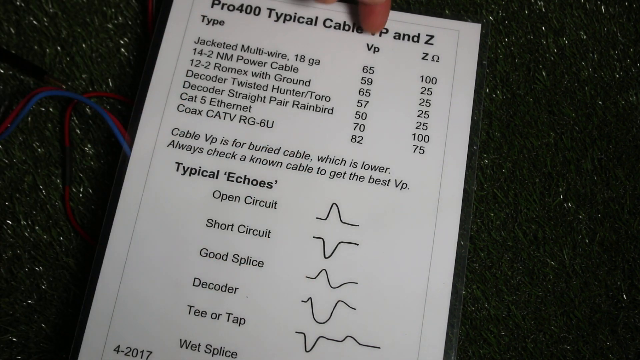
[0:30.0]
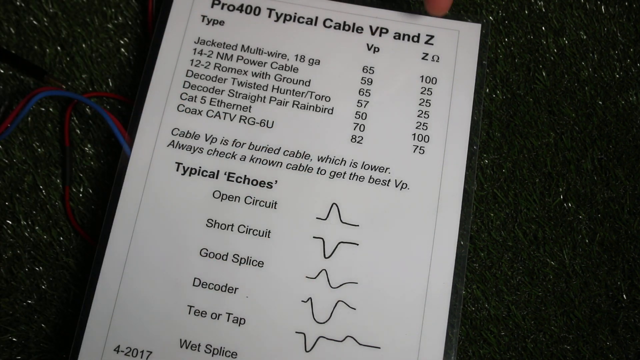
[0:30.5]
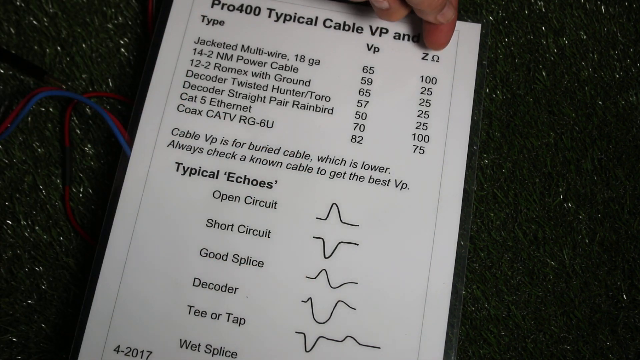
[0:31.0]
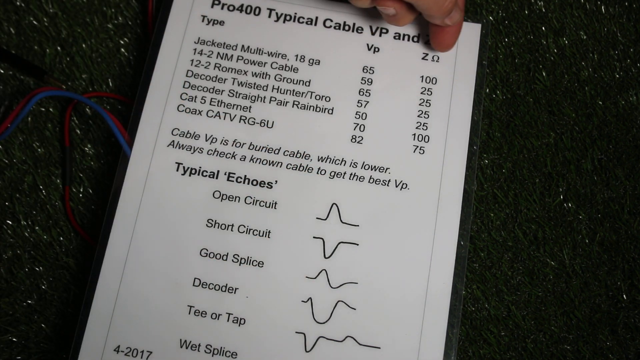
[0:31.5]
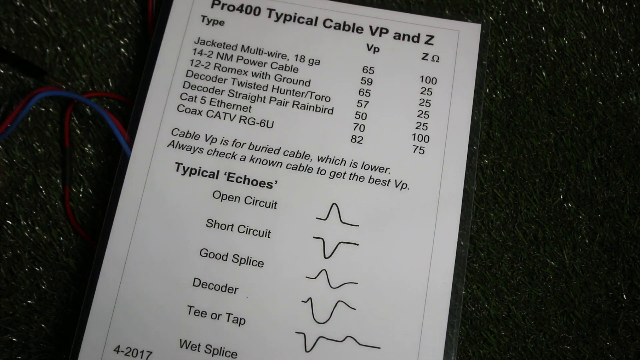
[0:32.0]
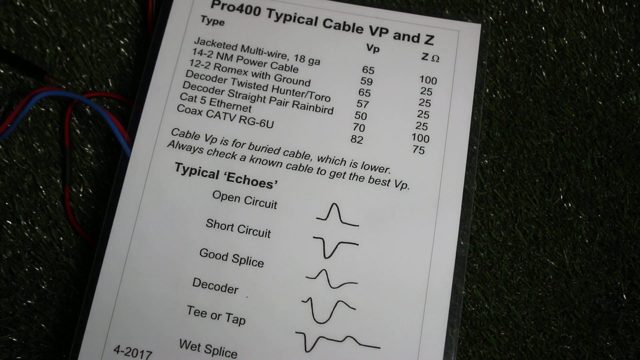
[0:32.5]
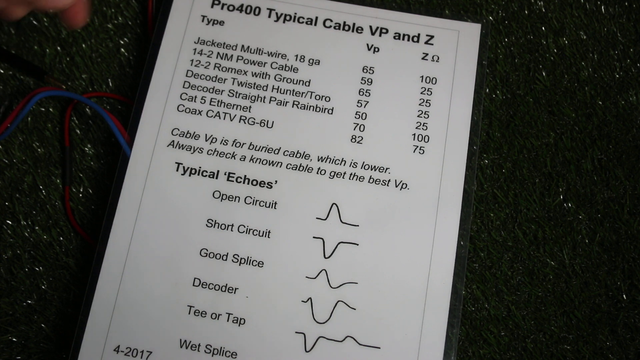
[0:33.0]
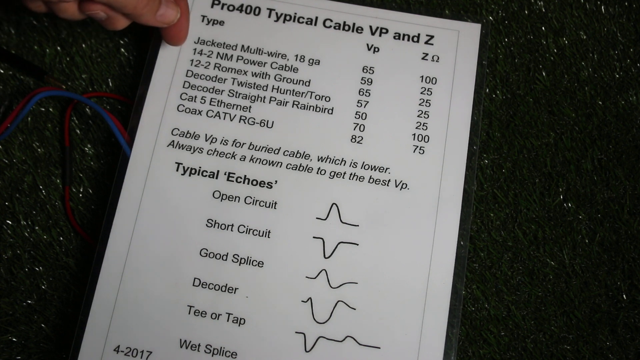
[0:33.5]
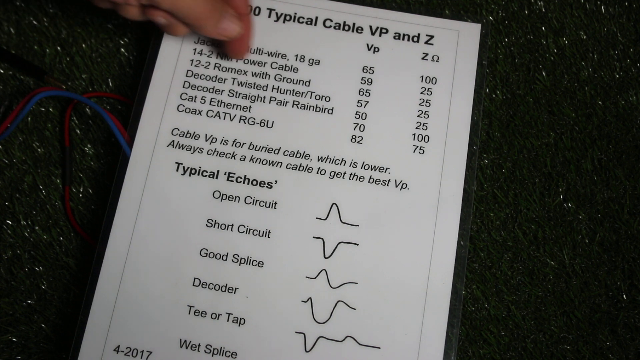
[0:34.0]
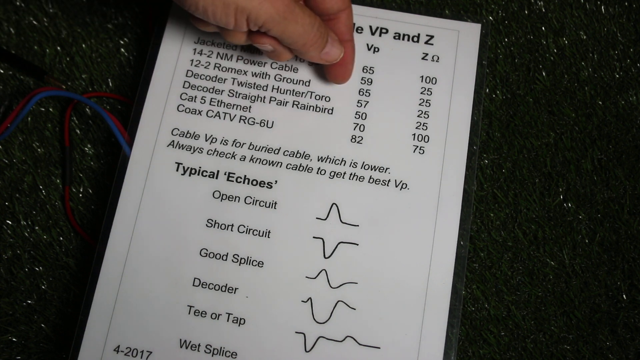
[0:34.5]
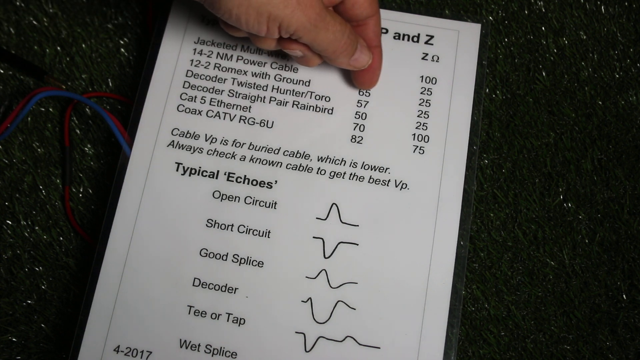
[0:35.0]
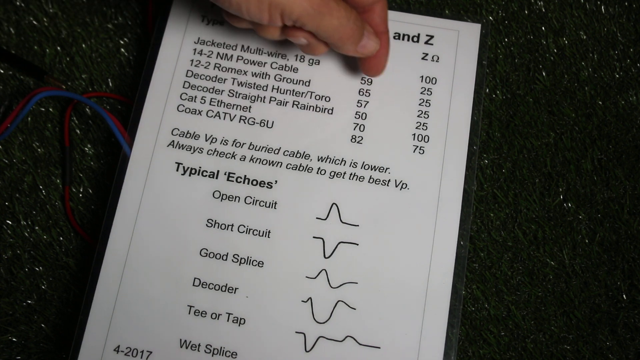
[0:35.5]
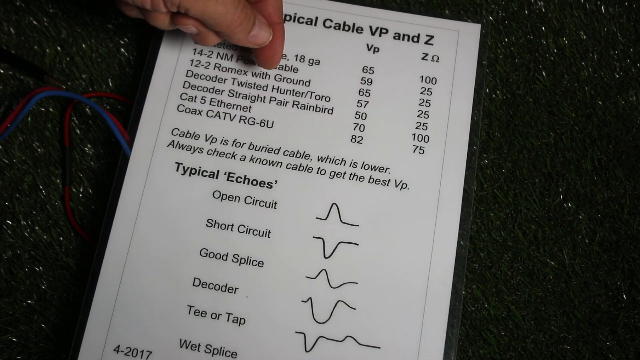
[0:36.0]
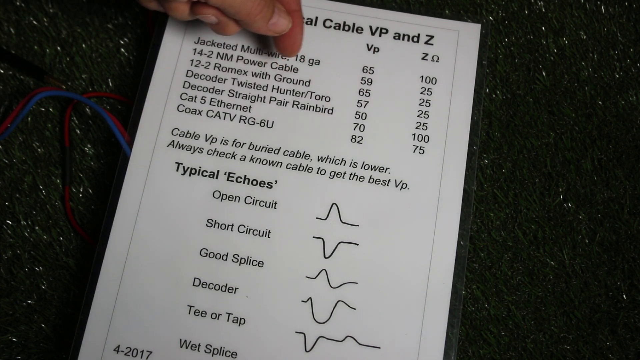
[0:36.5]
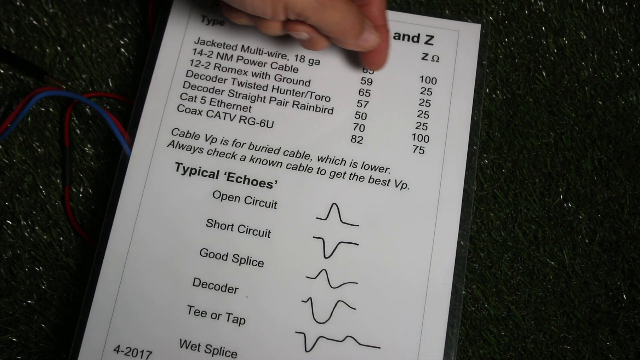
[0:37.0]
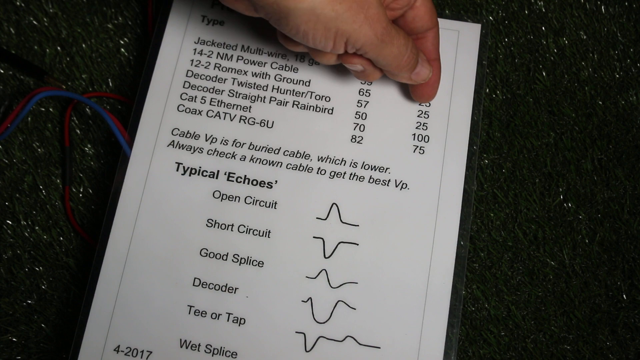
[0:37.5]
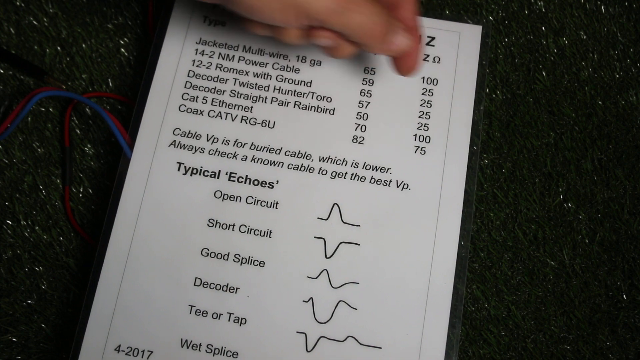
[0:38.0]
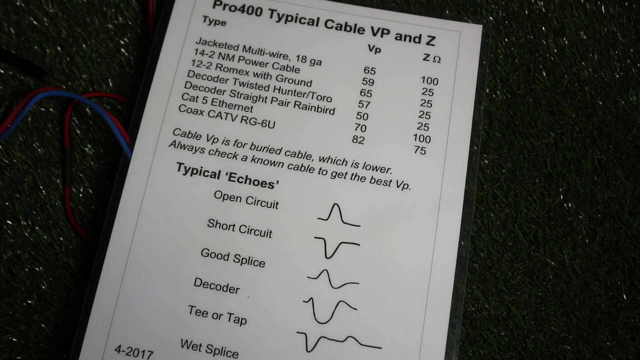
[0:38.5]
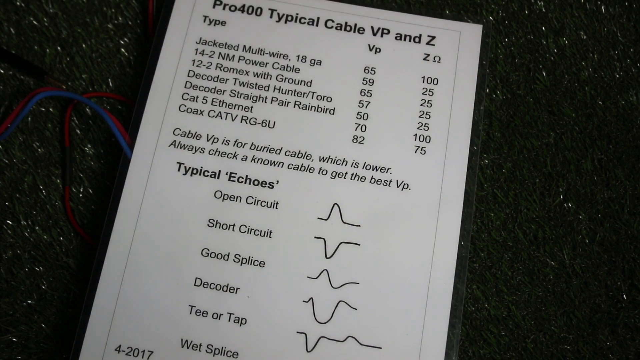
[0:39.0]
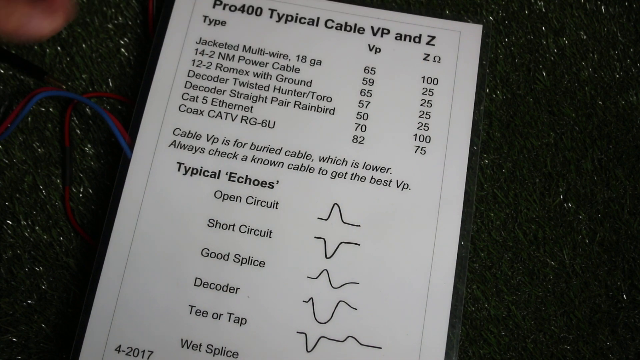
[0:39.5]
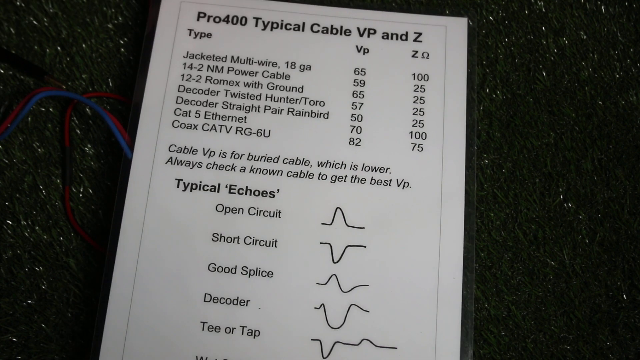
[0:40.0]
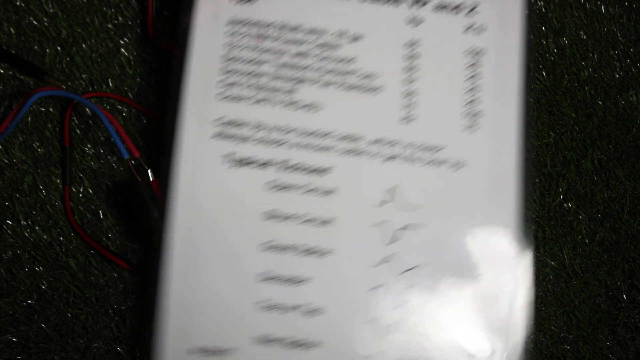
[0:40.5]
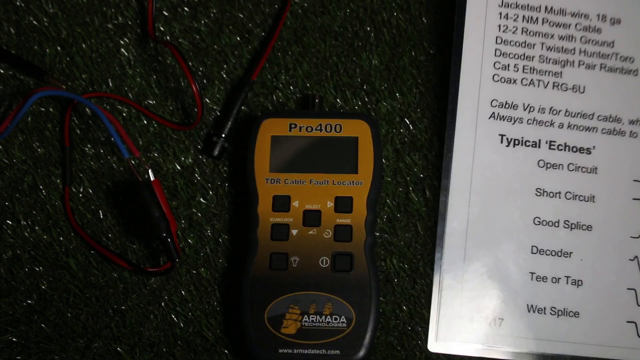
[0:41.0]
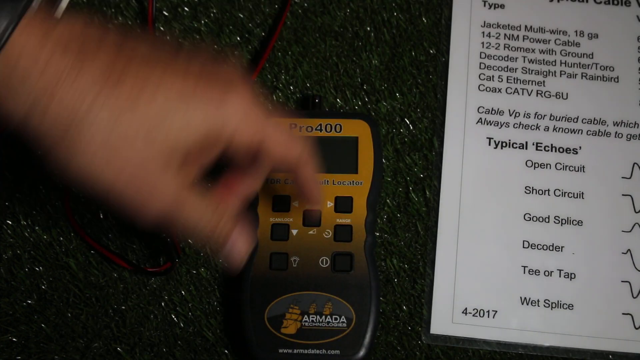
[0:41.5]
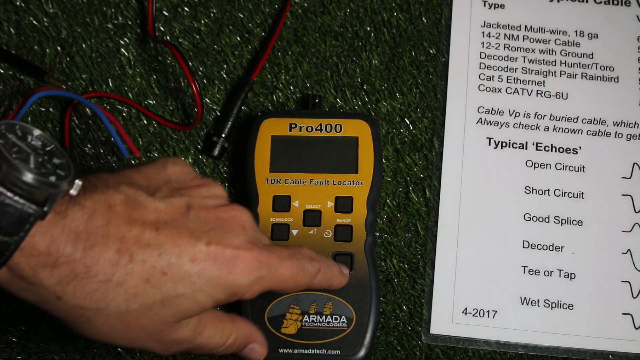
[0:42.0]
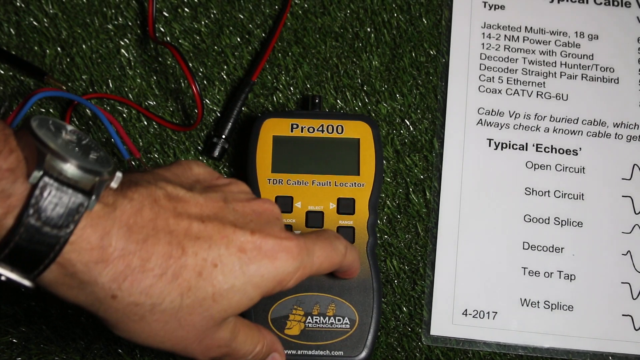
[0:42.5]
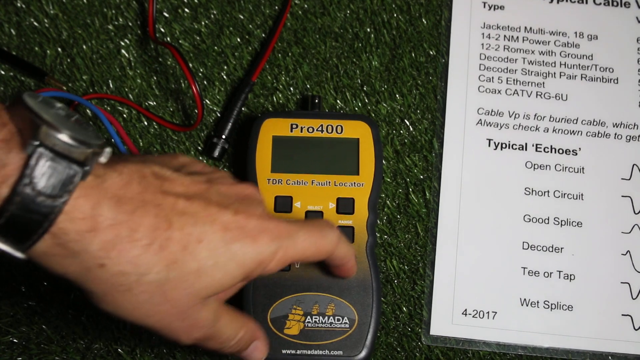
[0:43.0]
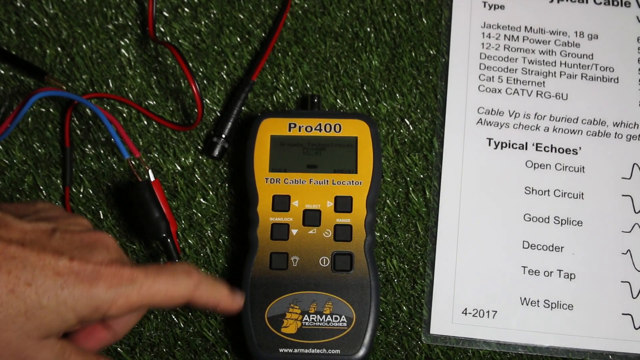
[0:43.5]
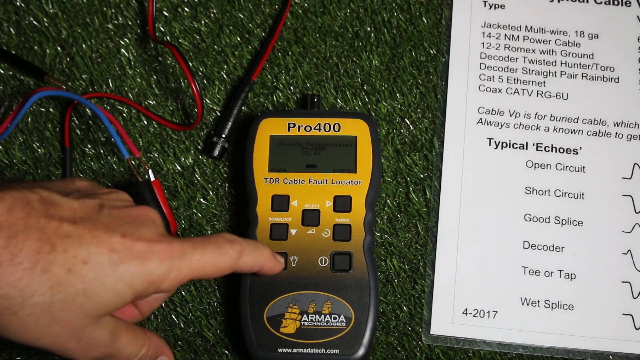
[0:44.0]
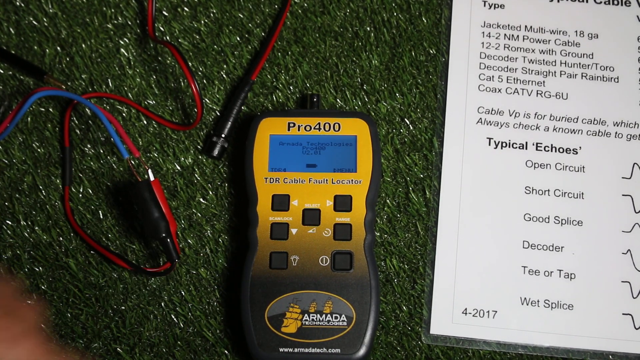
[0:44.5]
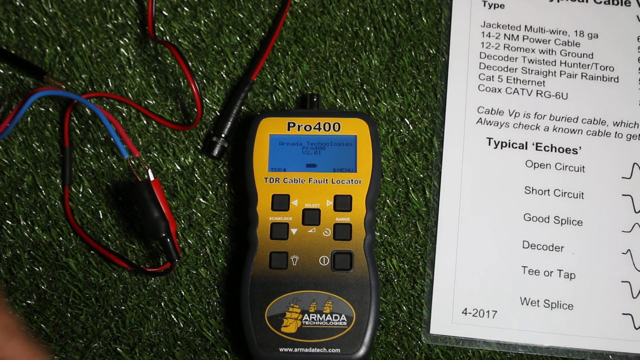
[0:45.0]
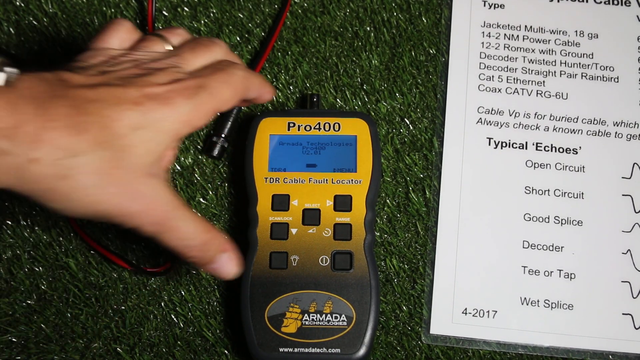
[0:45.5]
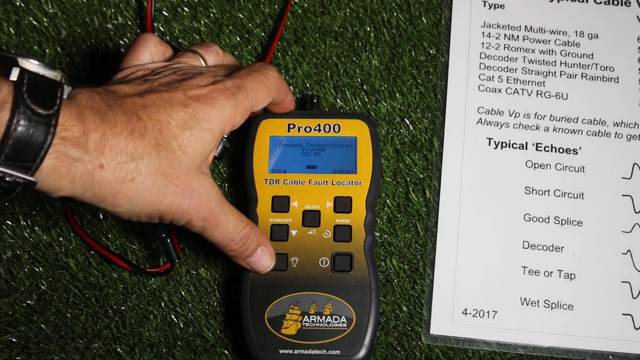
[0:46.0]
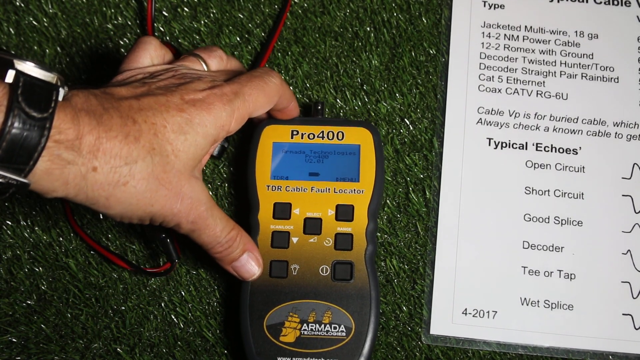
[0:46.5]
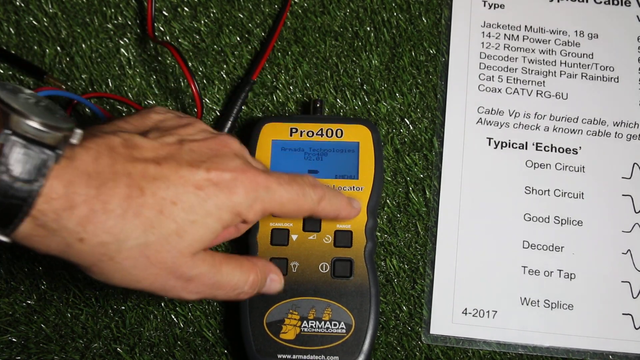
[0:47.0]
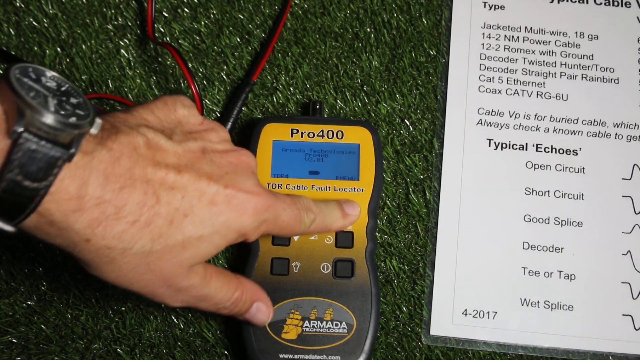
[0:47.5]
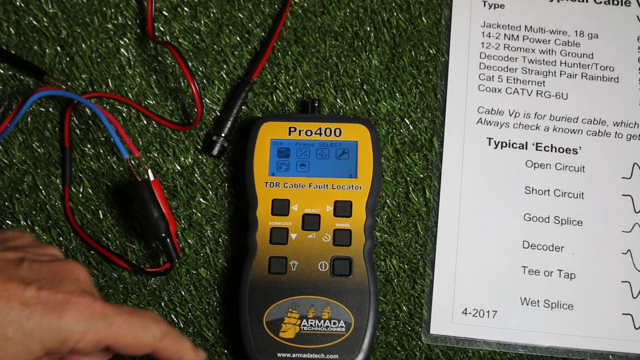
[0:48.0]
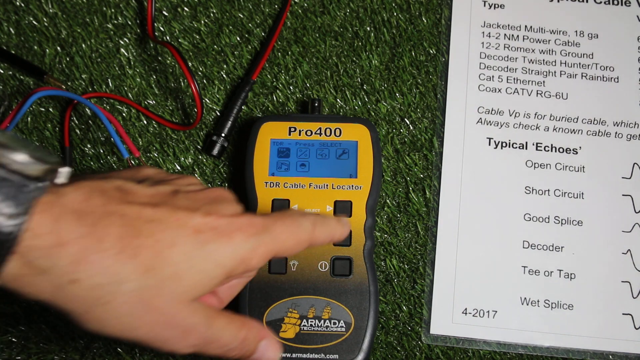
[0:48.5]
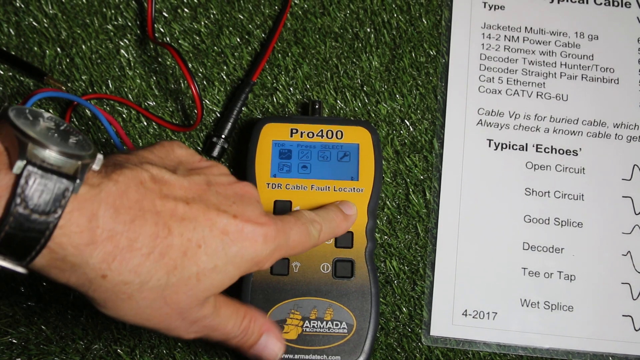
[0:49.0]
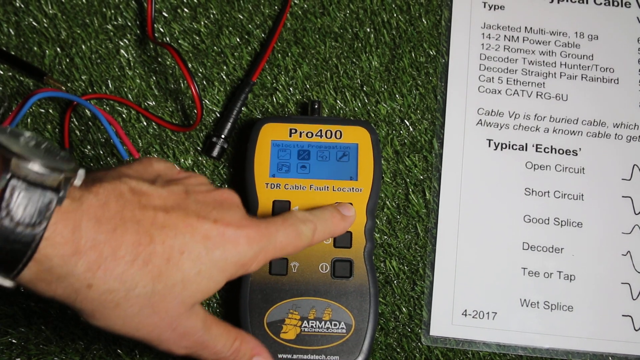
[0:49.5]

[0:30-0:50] A white piece of paper lays on artificial grass and on top of some wires, which poke out on the left side. A man uses his left hand to point out different information at the top of the paper. He then reaches over to the device and pushes various buttons, and the screen on the top illuminates with what looks like a slightly bluish light. He pushes two of the buttons, adjusts the device with his forefinger and thumb, and pushes the upper right button several times. The machine seems to turn on: the screen illuminates and readings appear on it, though what it is measuring is not yet clear.